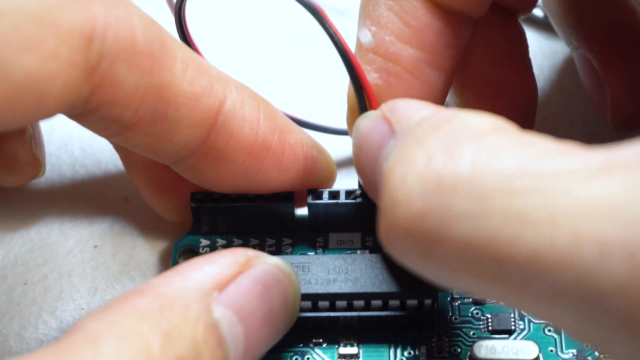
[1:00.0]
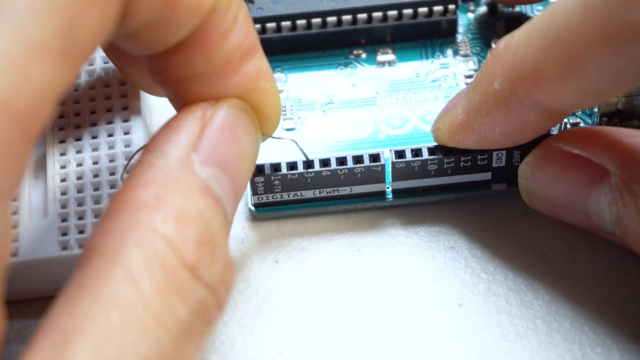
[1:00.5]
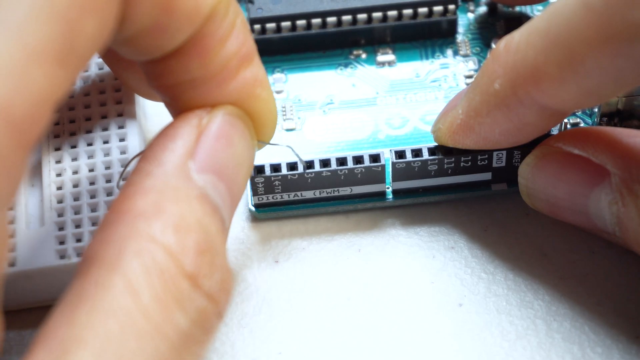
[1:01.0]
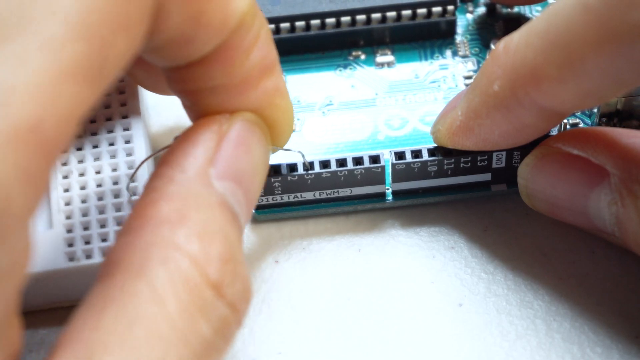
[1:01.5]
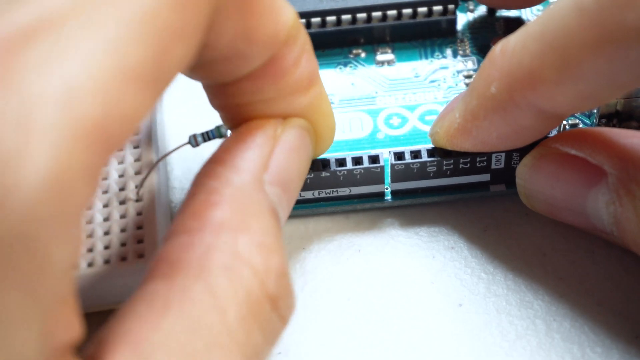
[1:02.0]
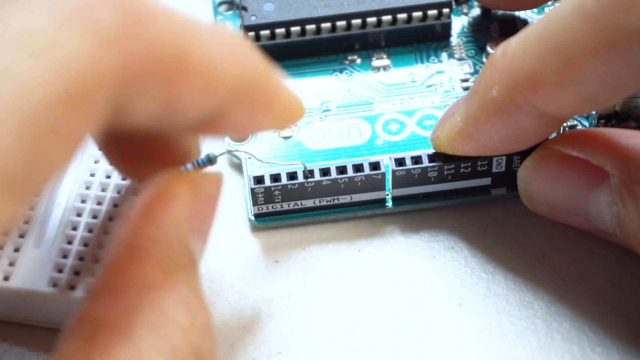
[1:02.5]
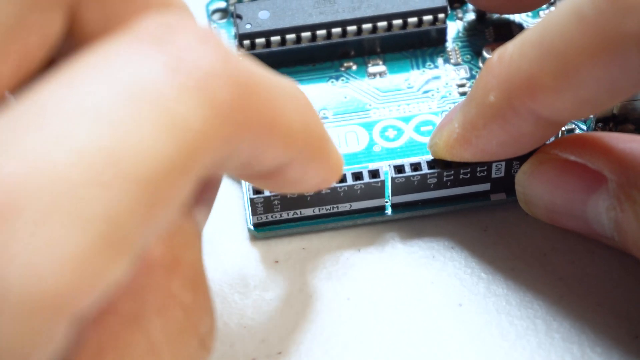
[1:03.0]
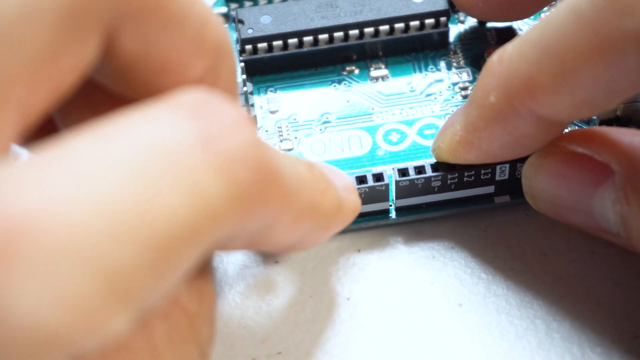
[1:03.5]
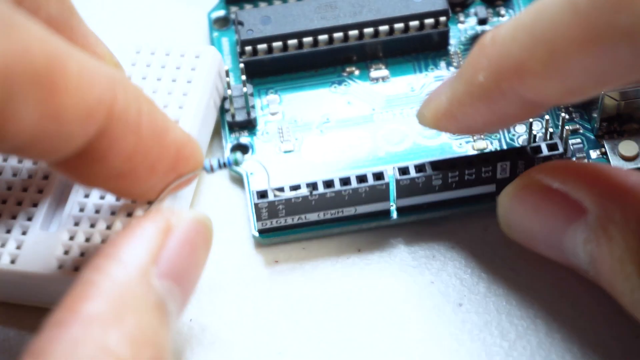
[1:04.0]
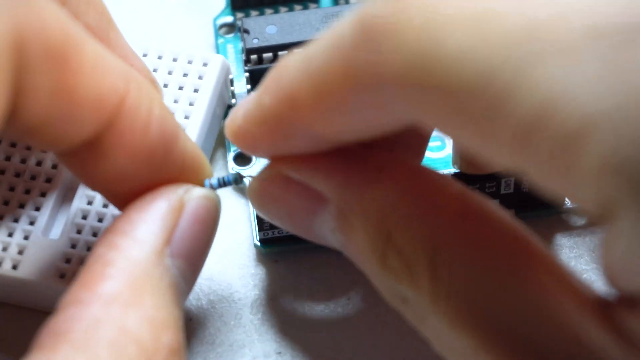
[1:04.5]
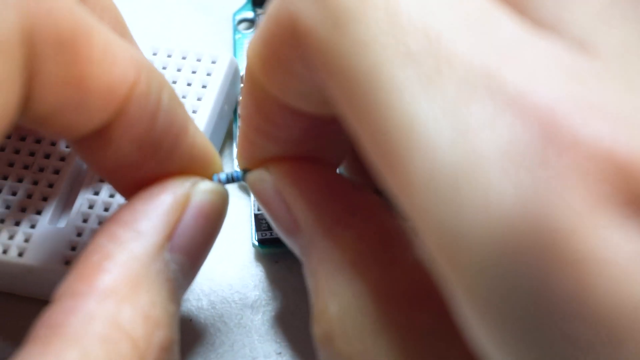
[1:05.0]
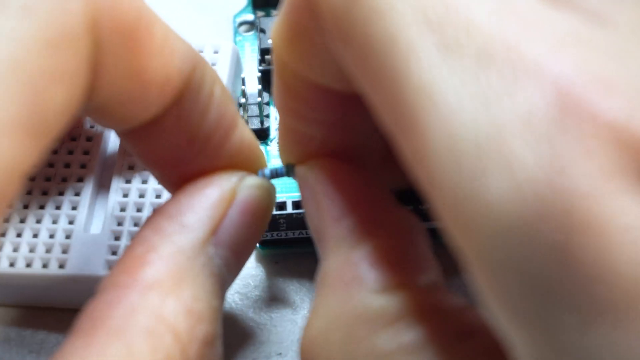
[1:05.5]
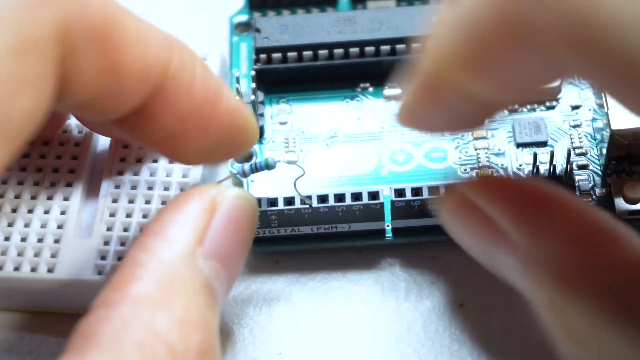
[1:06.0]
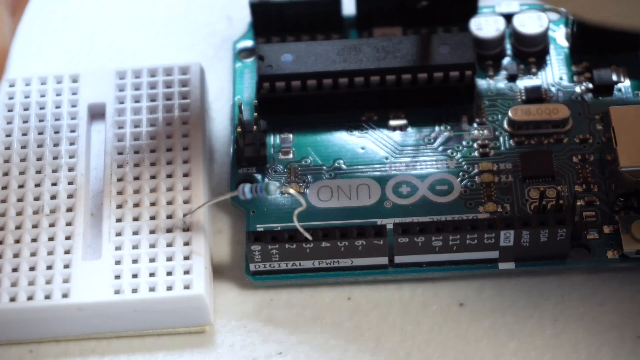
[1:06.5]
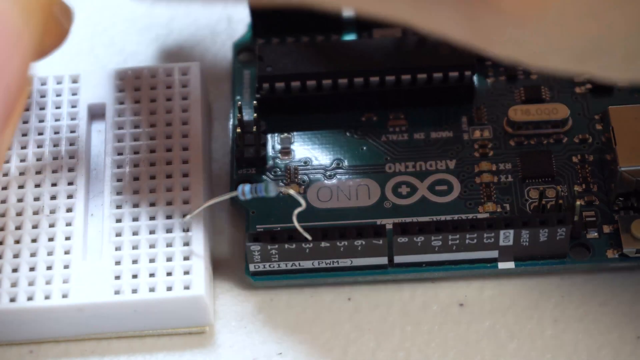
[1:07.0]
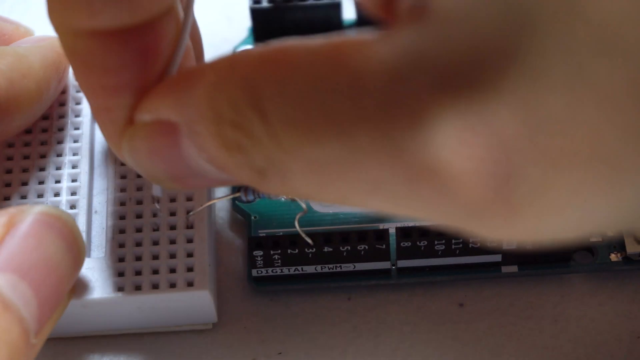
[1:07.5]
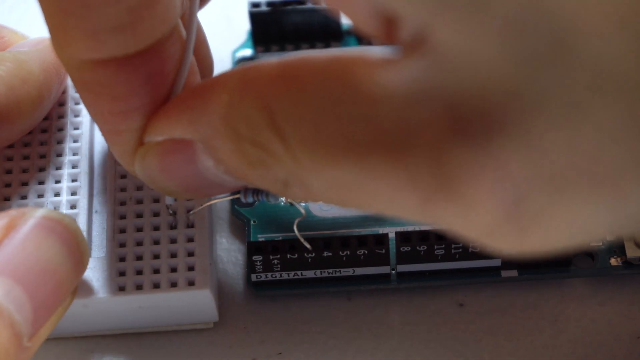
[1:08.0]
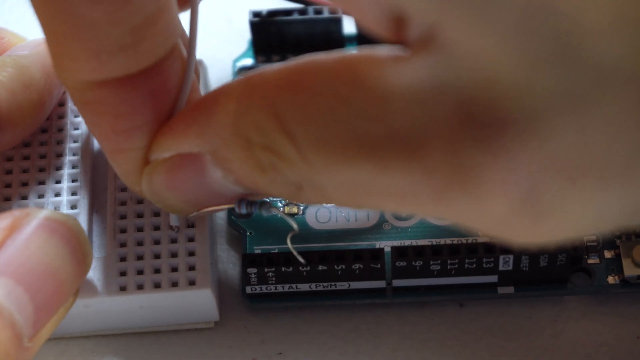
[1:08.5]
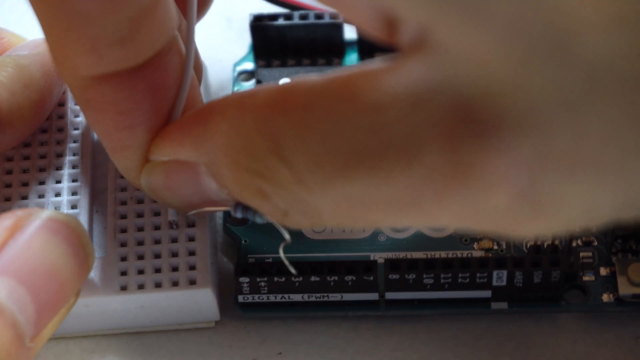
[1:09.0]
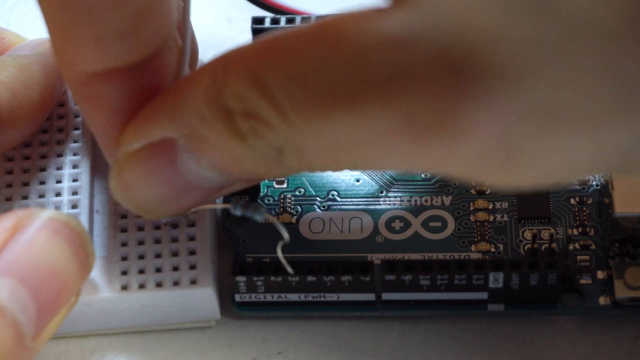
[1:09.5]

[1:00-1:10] A close-up shows the person attaching the red and green wires to the front of the circuit. Another shot shows someone using their left hand to attach the wires of the grid-like white rectangular object, connecting it to the circuit held in their right hand. He inserts the wires into one of the bottom rectangular tubes of the circuit and pinches the middle of the wire joining the two objects with his fingers. He then takes another white wire from the top of the screen and puts it into one of the holes of the rectangular object on the left.